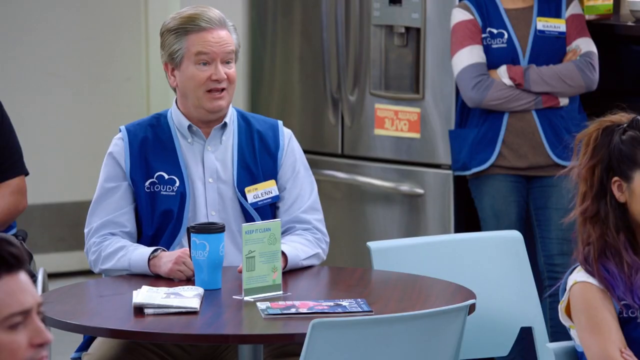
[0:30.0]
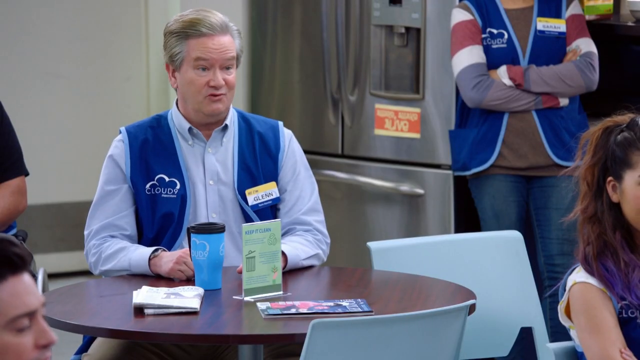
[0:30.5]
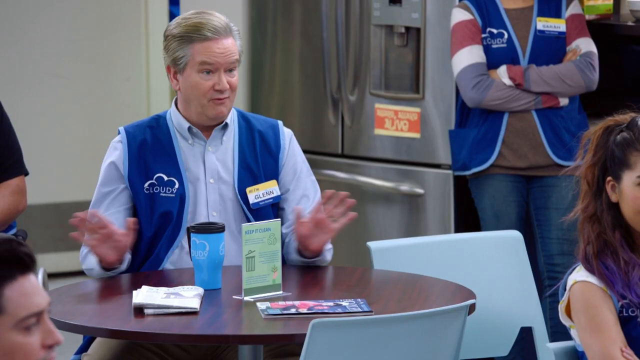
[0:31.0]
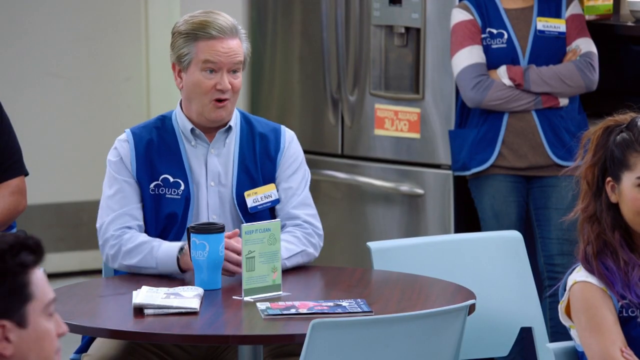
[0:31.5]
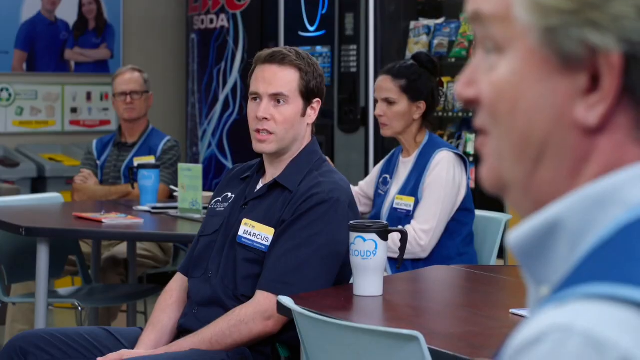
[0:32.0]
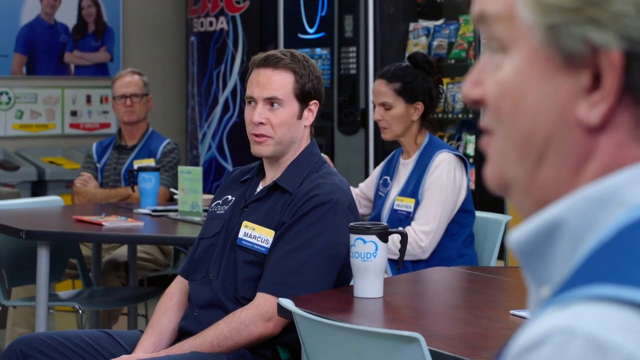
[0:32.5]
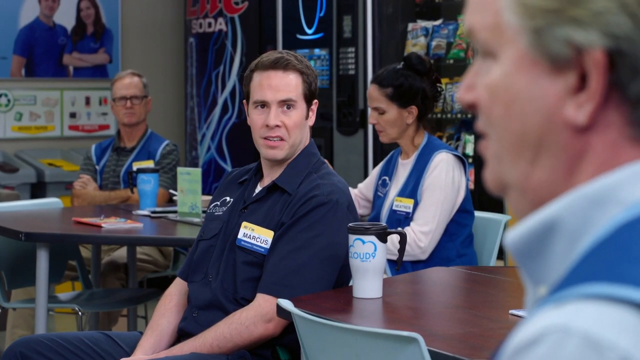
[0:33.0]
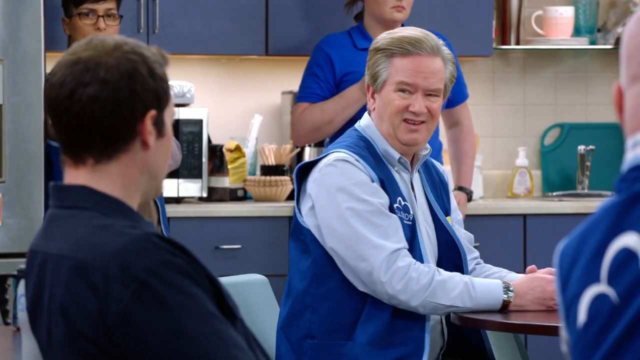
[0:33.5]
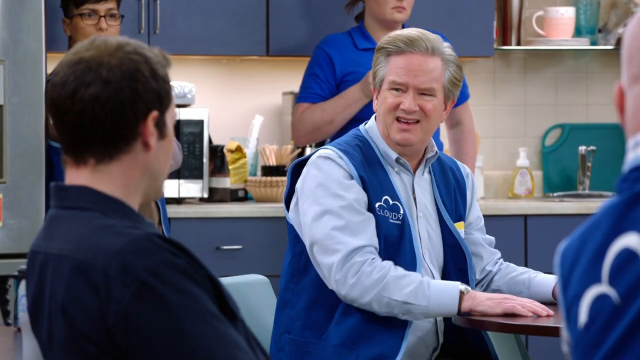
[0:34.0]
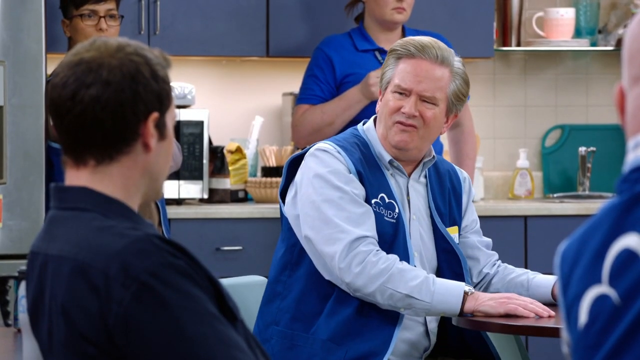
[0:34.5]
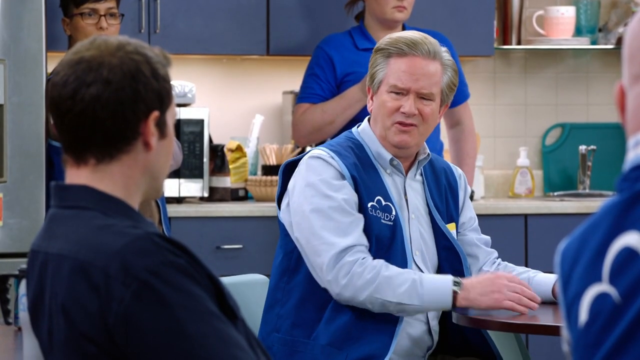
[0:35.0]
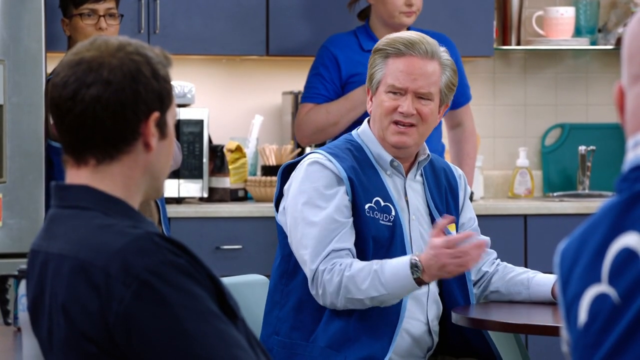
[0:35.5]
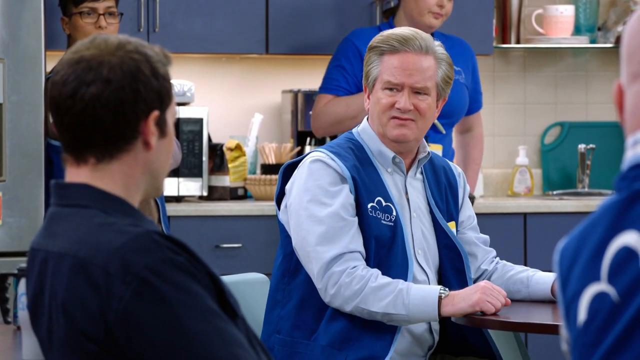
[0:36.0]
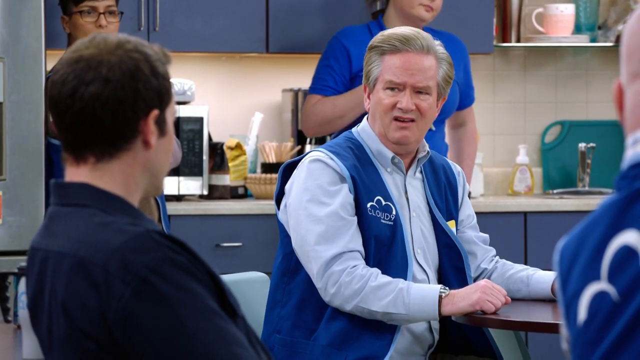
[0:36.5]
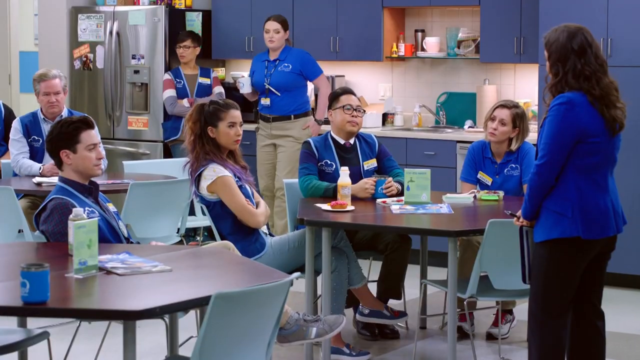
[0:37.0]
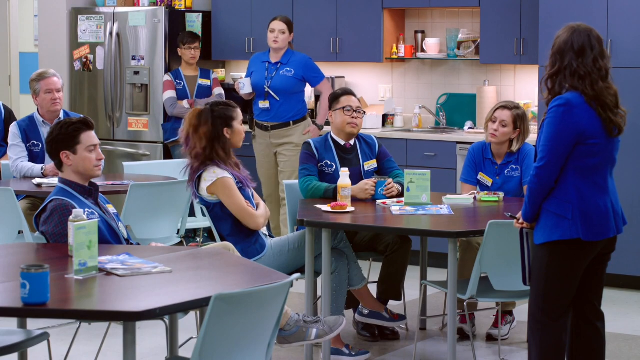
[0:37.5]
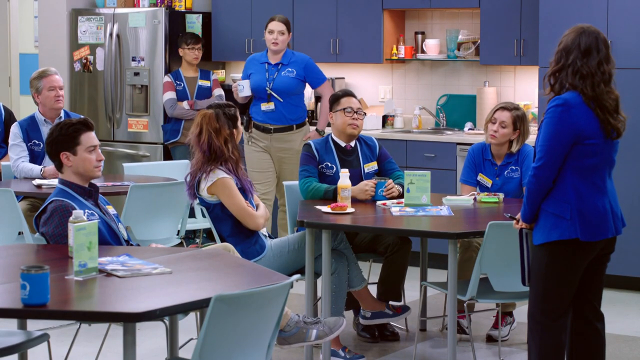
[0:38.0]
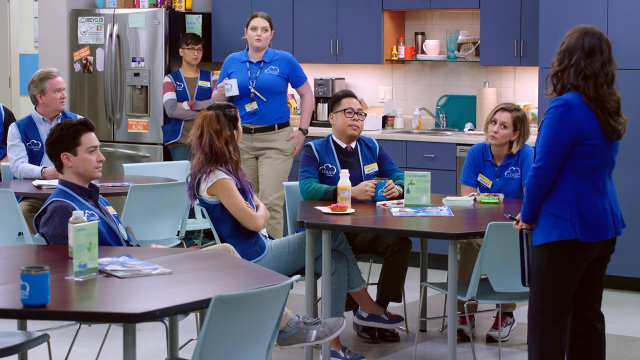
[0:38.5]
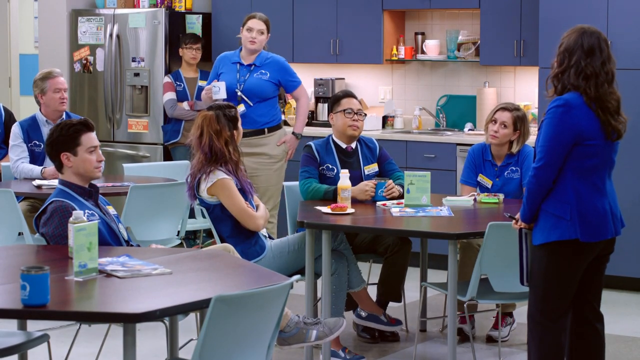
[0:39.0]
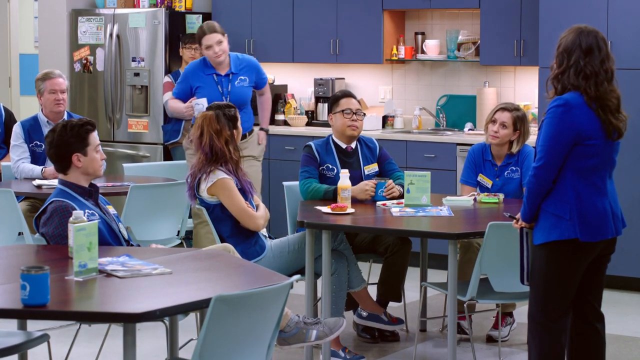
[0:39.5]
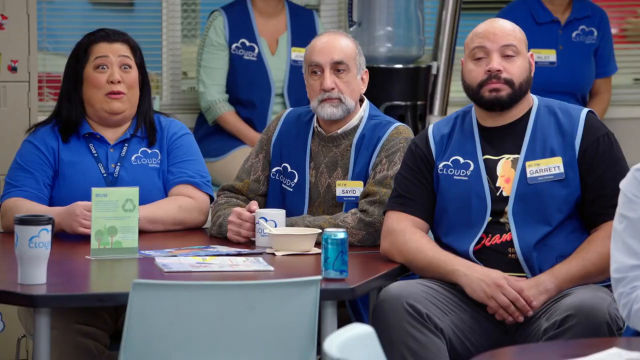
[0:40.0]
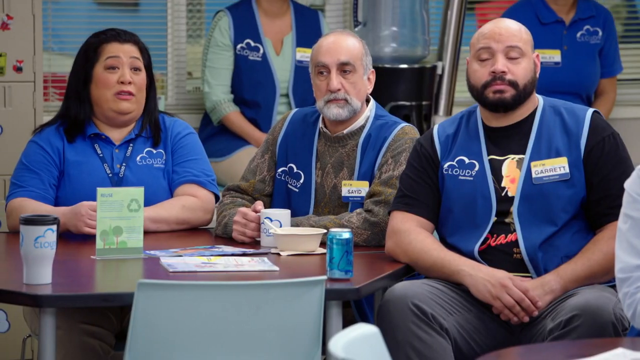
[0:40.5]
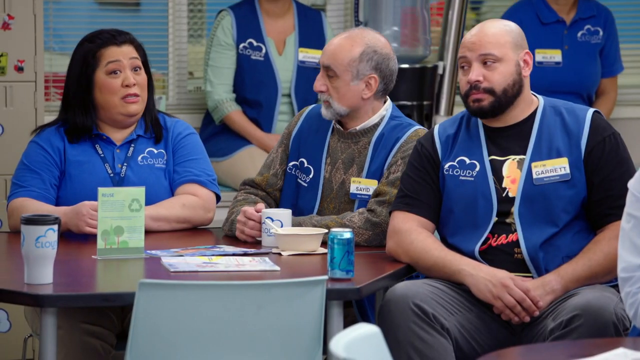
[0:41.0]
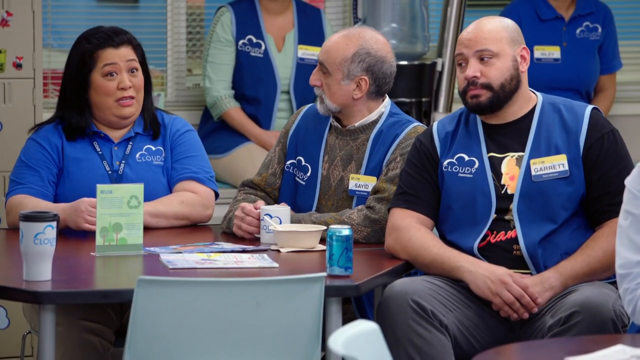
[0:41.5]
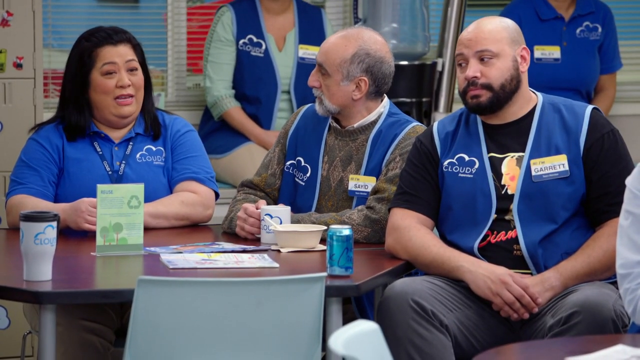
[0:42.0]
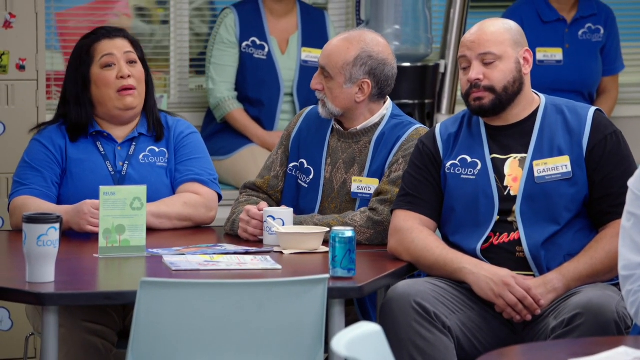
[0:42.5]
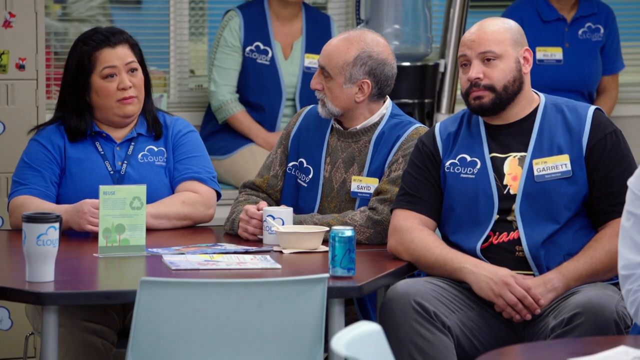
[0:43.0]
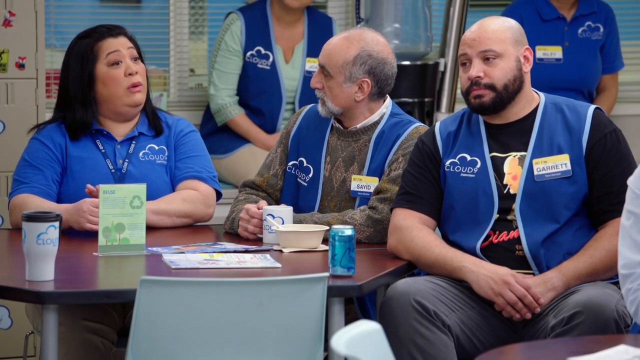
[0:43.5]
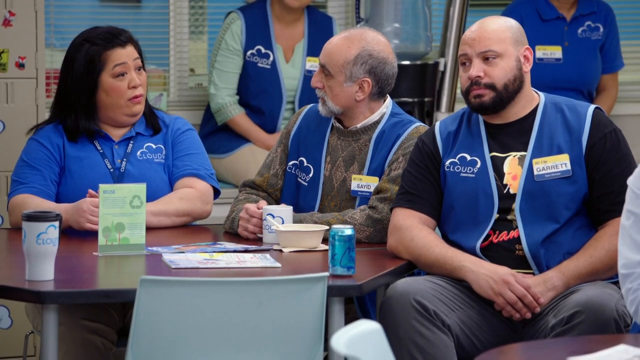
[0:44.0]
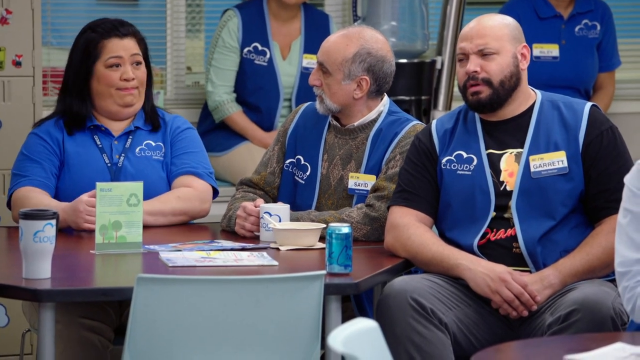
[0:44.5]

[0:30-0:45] An older gentleman sitting at the back of the room makes a comment with a concerned face. A younger man sitting to his left, wearing a darker long-sleeved shirt, comments back, and the older gentleman seems to respond with disgust on his face as he speaks. A lady standing to the right of the older gentleman, having made coffee, walks forward toward a seat and makes a remark as she sits down. A lady sitting at another table then makes a comment with a more neutral look on her face.